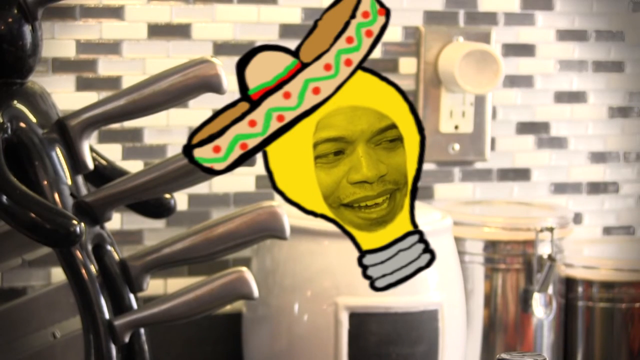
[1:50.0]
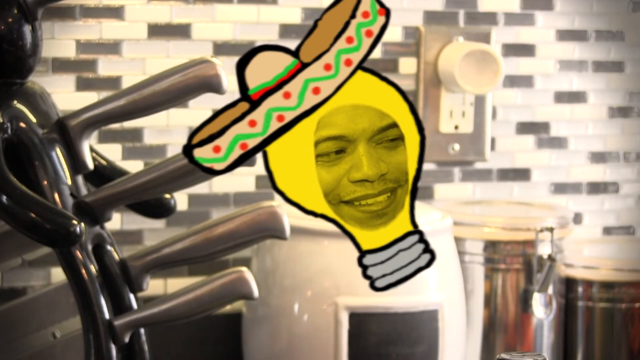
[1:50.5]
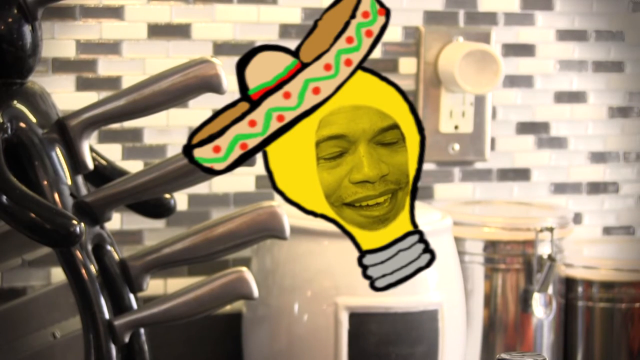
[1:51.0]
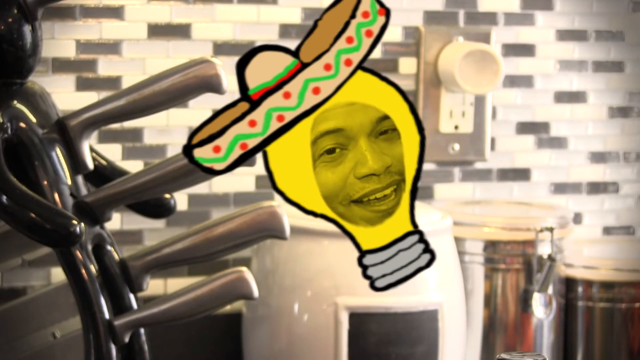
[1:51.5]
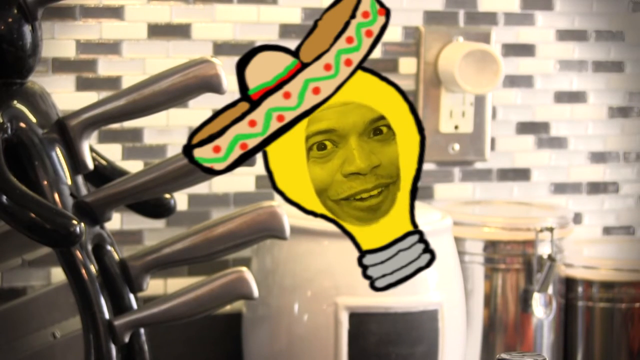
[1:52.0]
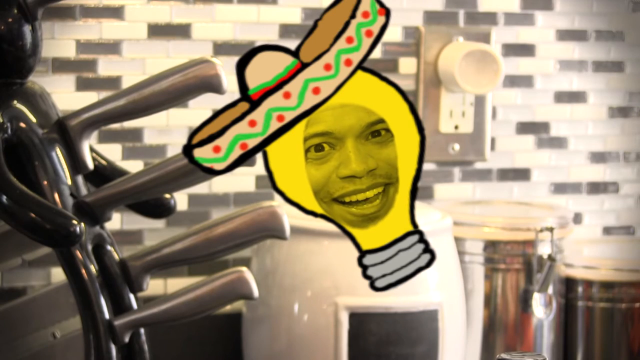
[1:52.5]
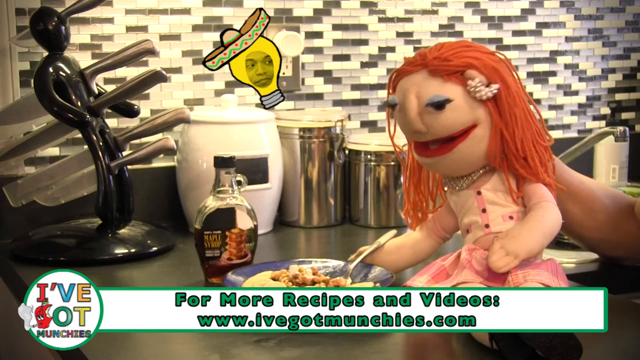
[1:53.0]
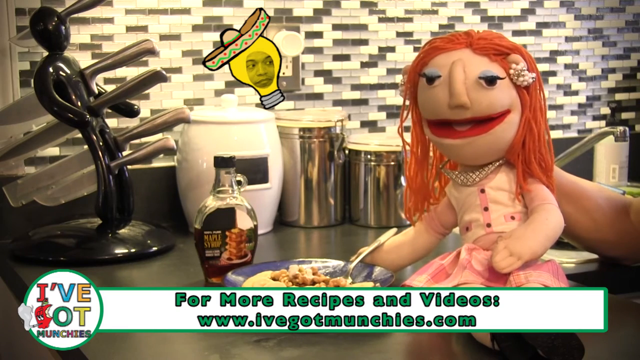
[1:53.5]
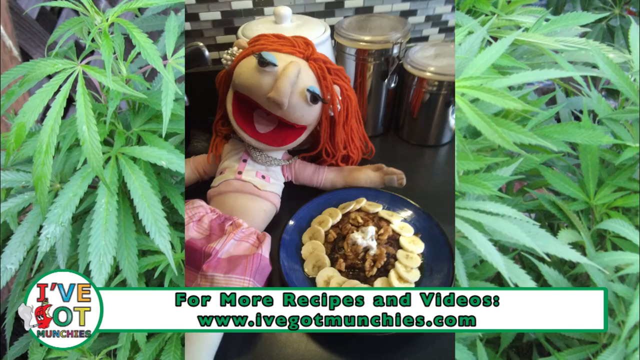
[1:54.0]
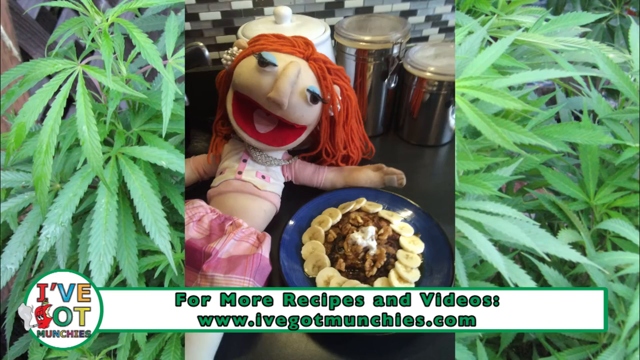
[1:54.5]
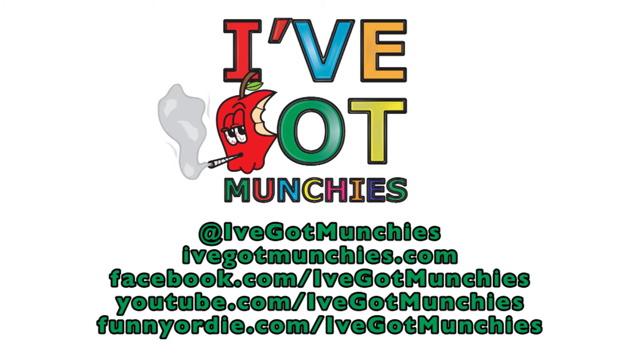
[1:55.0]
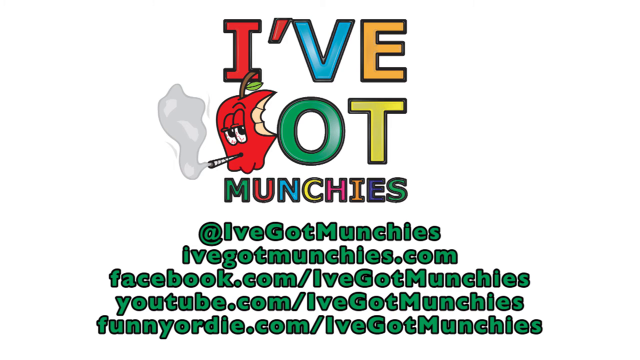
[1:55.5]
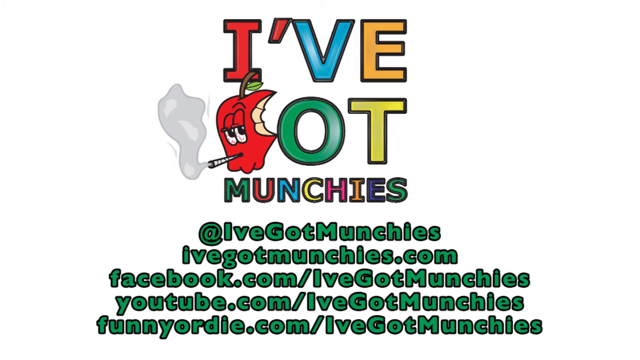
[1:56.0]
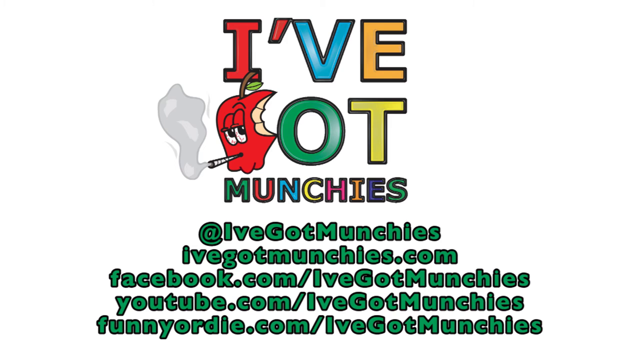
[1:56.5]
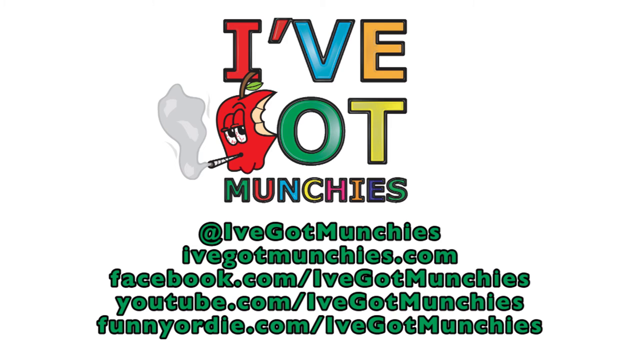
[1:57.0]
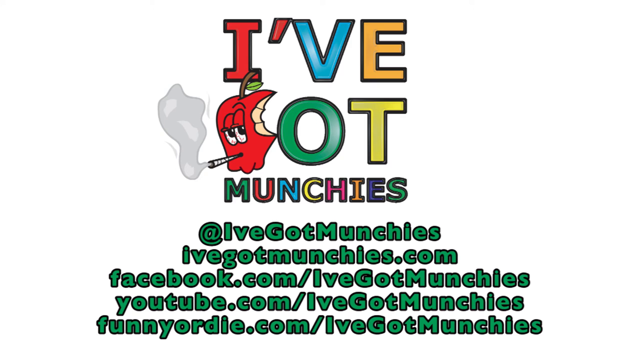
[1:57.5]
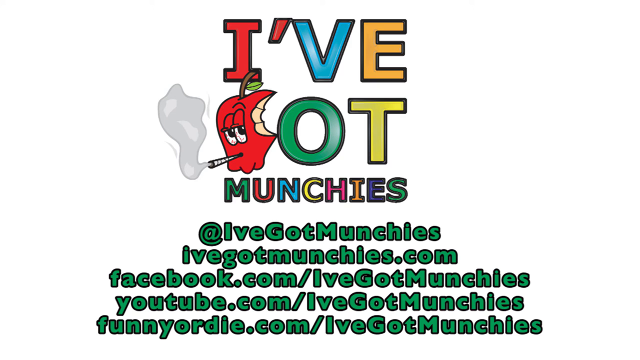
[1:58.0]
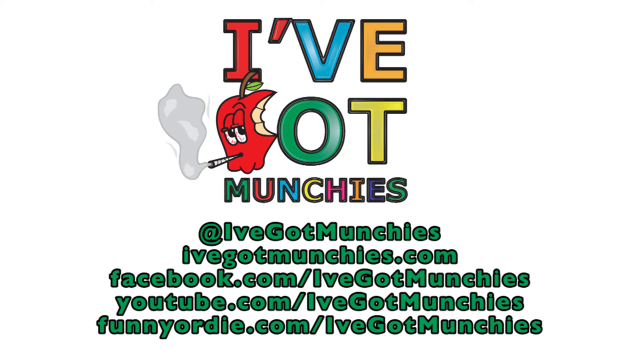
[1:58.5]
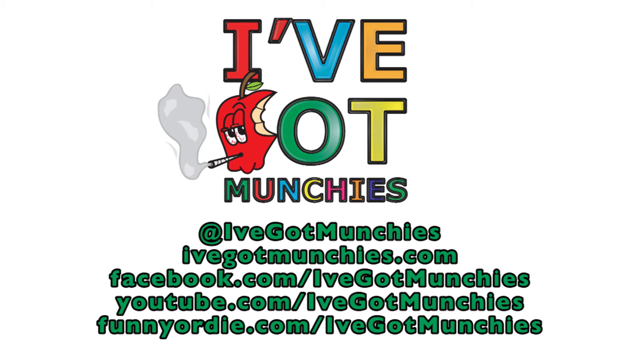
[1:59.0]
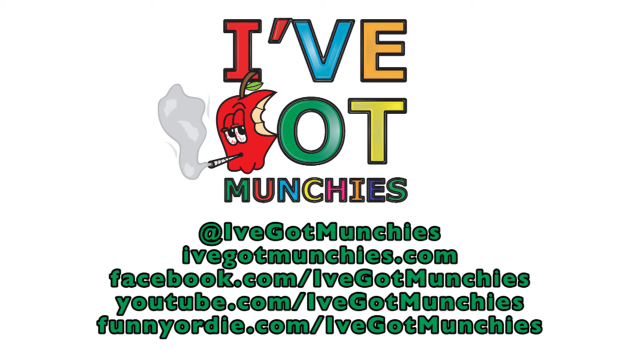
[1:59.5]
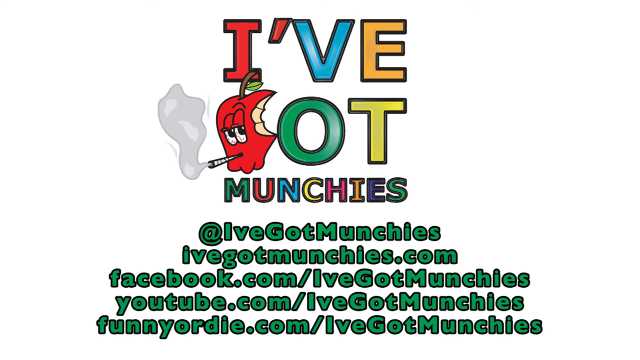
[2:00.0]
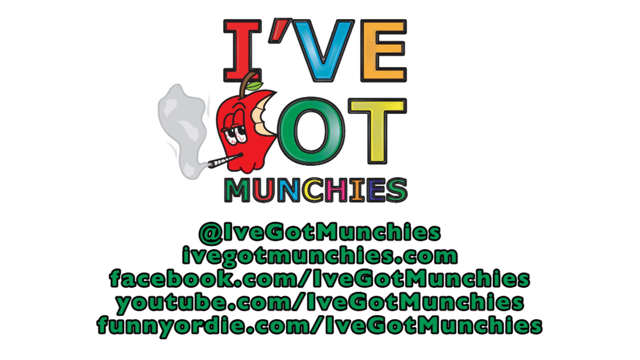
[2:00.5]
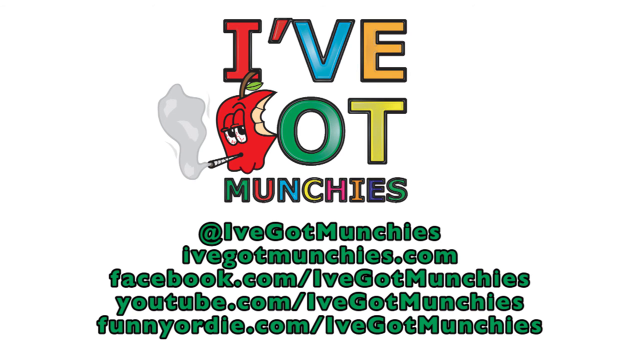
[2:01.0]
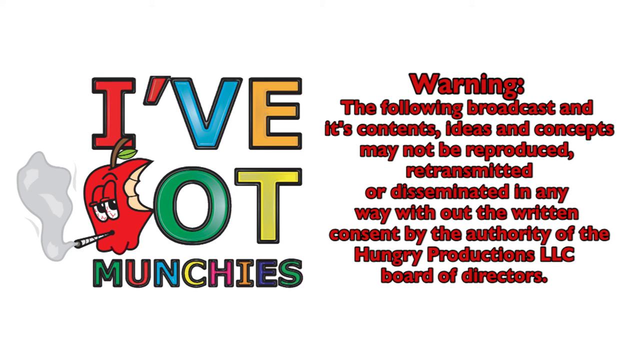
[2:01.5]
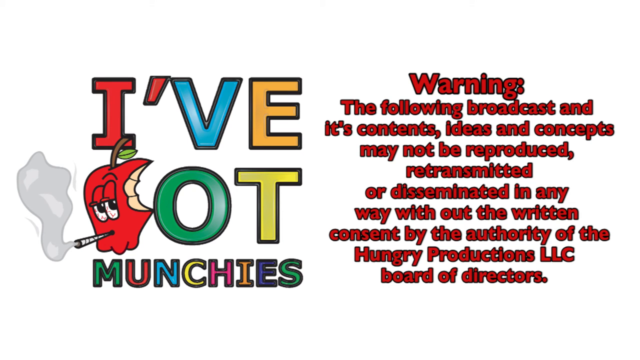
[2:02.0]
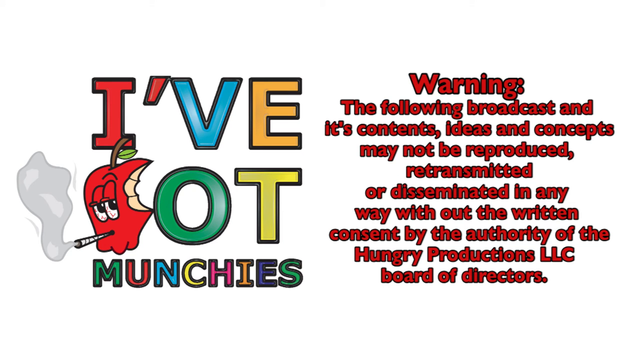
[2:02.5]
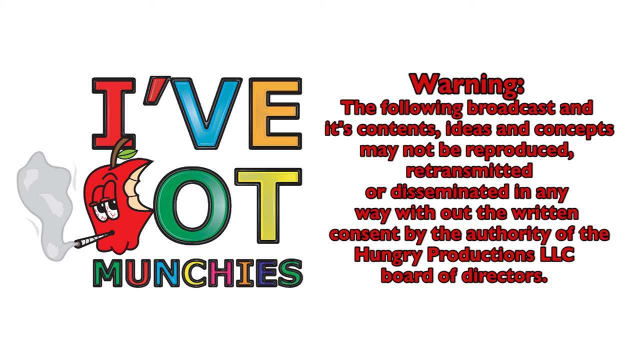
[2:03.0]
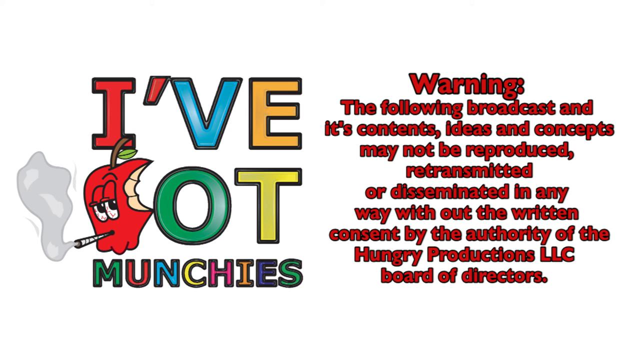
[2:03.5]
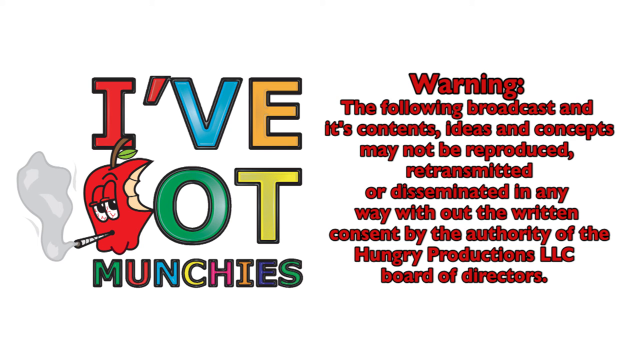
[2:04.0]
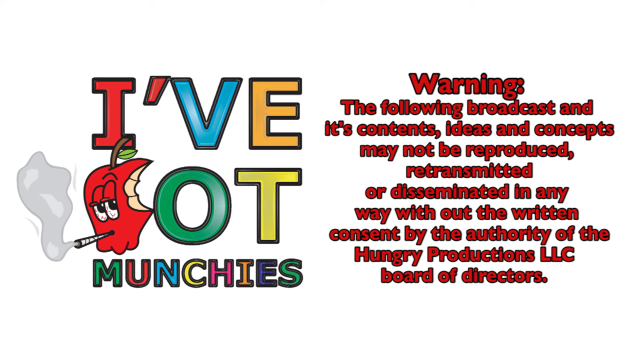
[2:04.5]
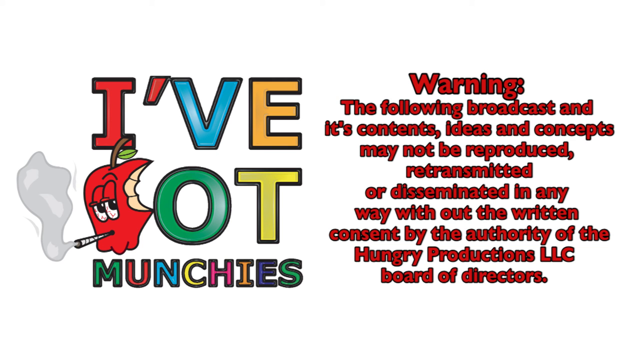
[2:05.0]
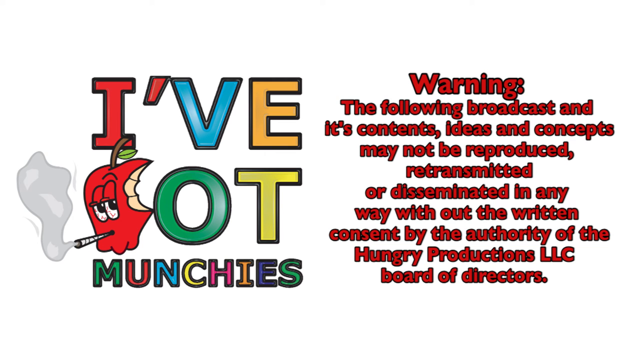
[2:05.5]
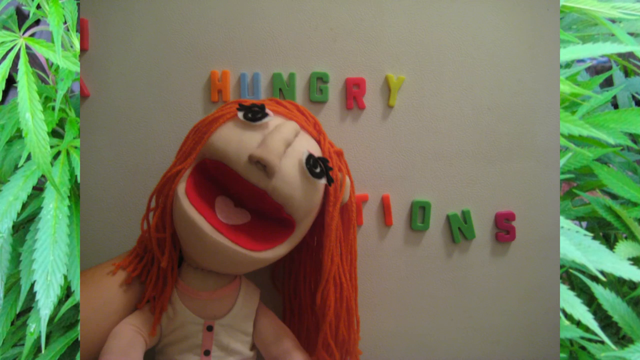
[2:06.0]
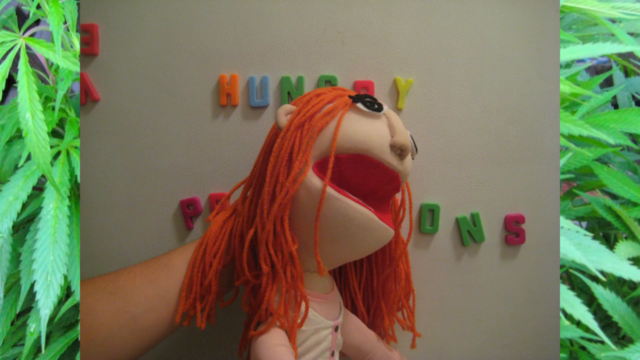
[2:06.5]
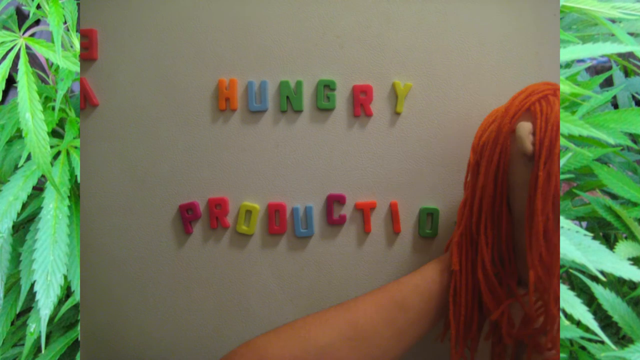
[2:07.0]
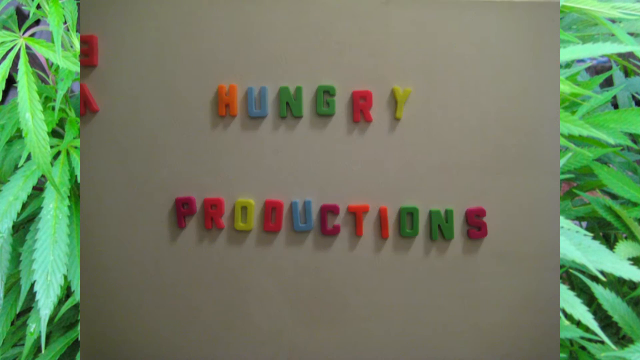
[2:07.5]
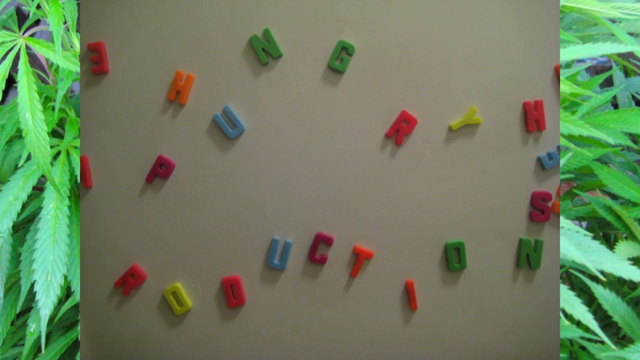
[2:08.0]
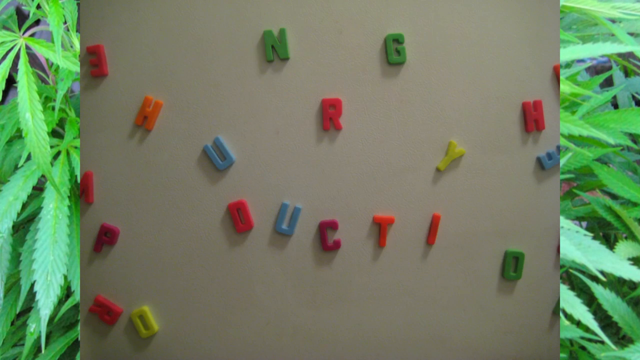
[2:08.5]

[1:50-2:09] The light bulb has a sombrero on top and appears to be talking. The puppet, with long orange yarn hair, is shown with pancakes on the counter and a bottle of syrup in the background. It wears a pink dress of some sort and what looks like blue eye shadow, and someone's hand is visible behind it. Text reads "for more recipes and videos, www.ivegotmunchies.com", with the I've Got Munchies logo on the left-hand side. Pictures of the puppet with the pancakes appear, along with the I've Got Munchies logo and their socials in green text at the bottom of the screen: "I've Got Munchies.com", "facebook.com, I've Got Munchies", "youtube.com, I've Got Munchies" and "funnyyordie.com, I've Got Munchies". Then text reads "the following broadcast contains ideas, concepts that may not be reproduced, transmitted, or disseminated in any way", referring to the consent of Hungry Production LLC, Board of Directors.